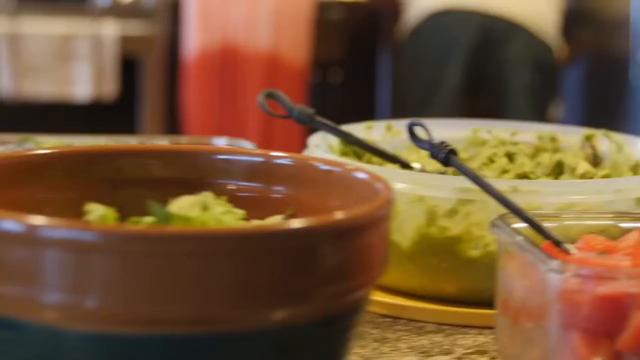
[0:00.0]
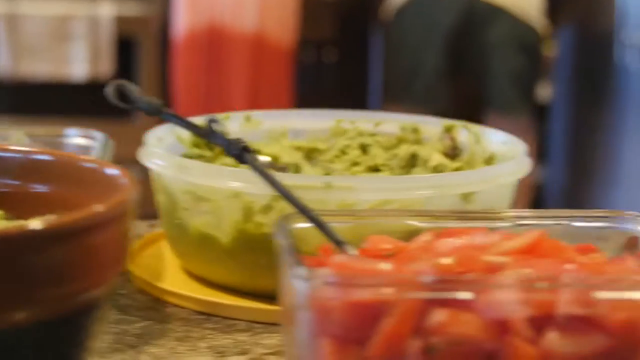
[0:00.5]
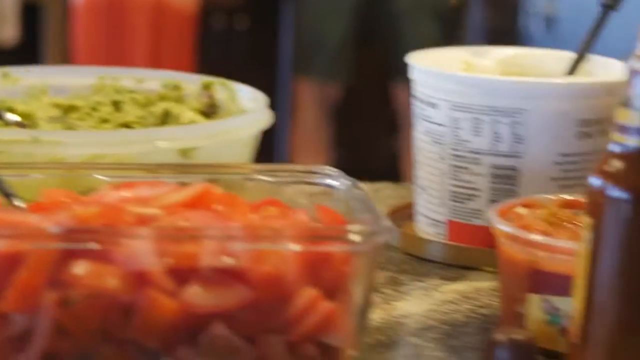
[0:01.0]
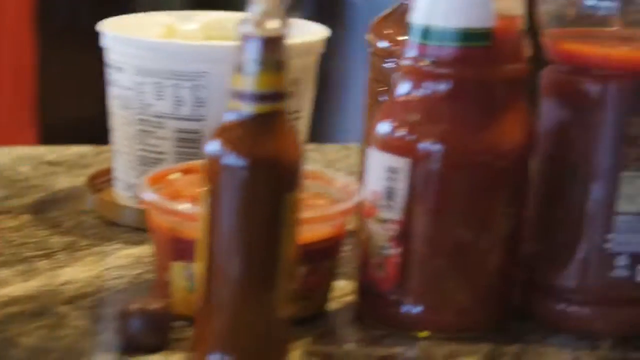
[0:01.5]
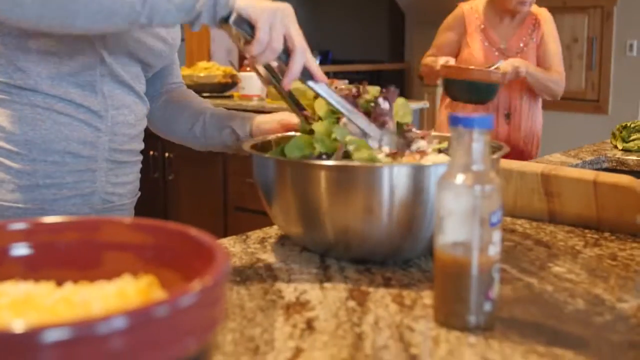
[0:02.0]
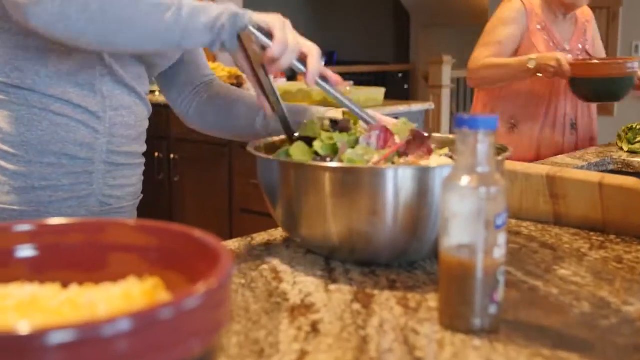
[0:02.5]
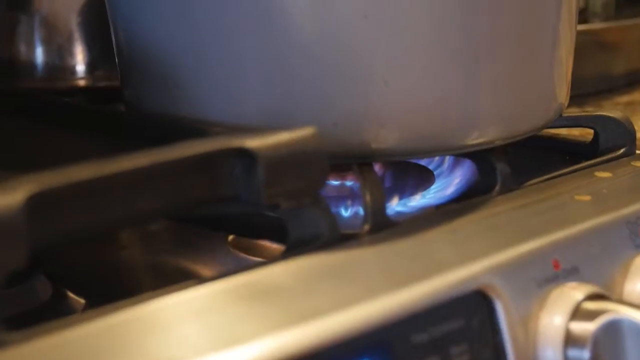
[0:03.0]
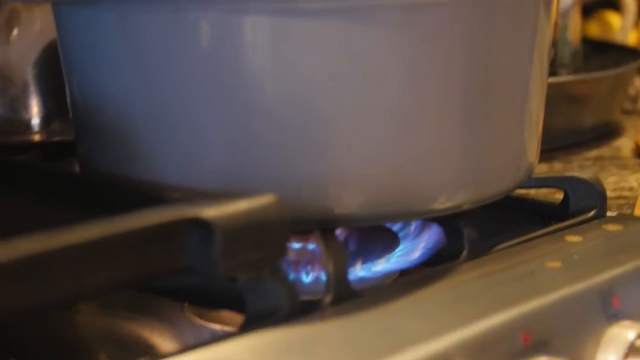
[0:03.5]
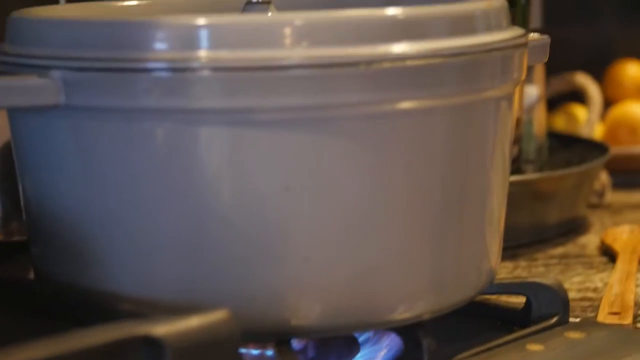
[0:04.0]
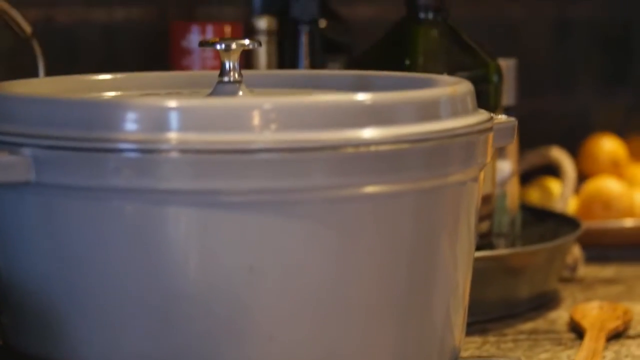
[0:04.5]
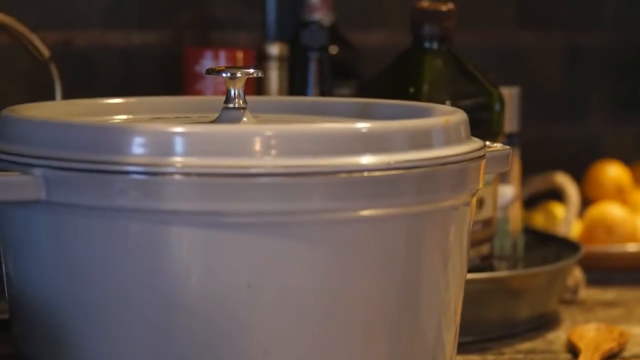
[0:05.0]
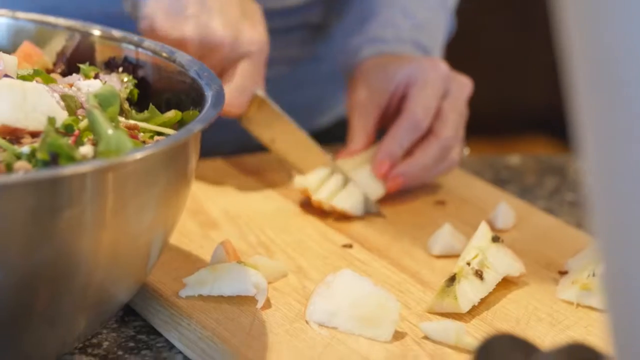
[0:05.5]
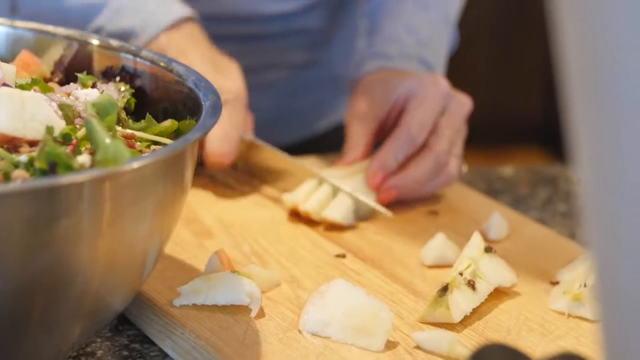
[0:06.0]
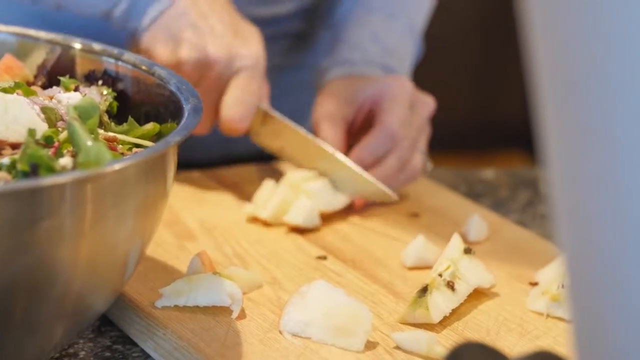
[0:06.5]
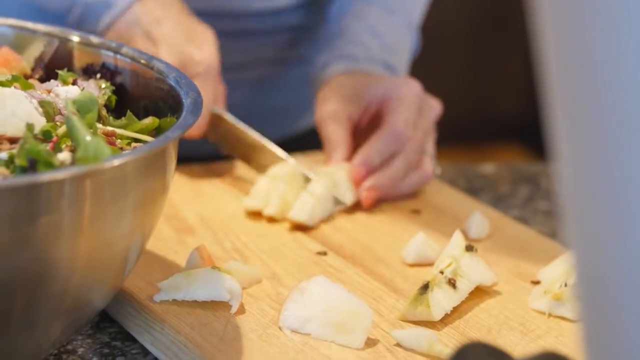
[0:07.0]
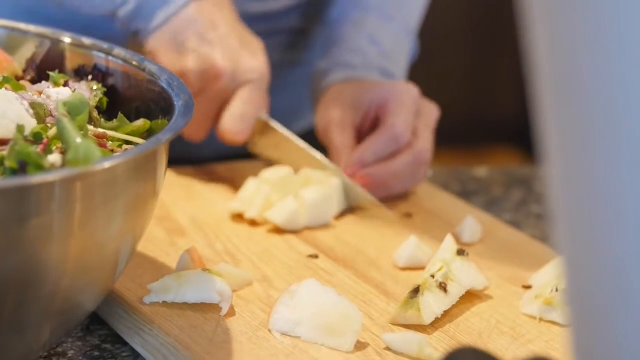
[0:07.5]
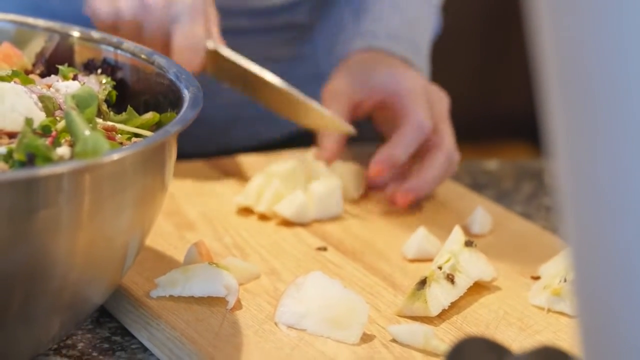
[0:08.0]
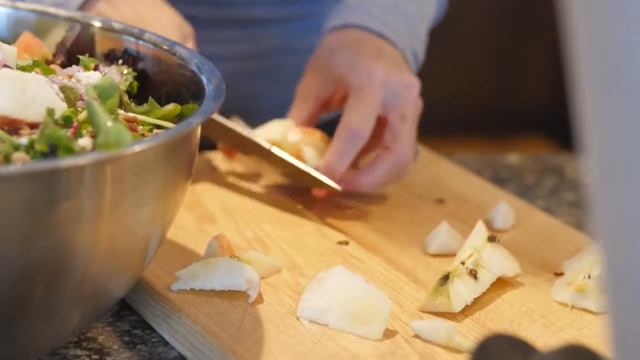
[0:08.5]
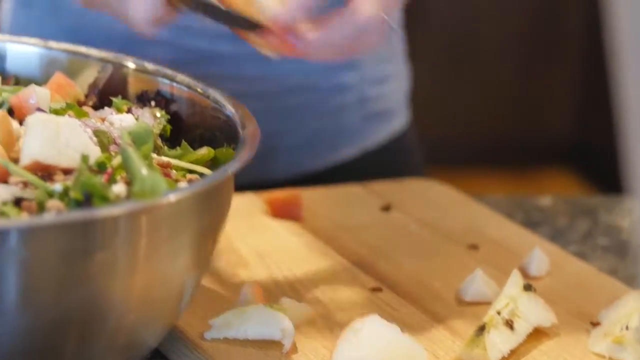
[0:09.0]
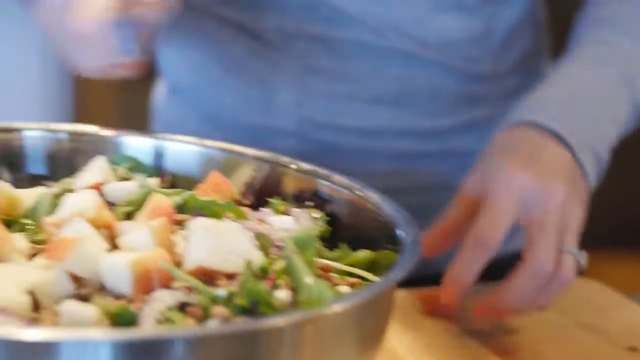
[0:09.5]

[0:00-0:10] Several different colored bowls appear: a brown bowl, a clear bowl and a glass bowl, with spoons in them. One has lettuce, one looks like it holds guacamole, and one looks like it holds tomatoes. A lady in a white shirt tosses a salad. A silver pot is on the stove. Someone cuts potatoes with a knife and throws them into a bowl. The camera pans across the items again, and the flame under the pot on the stove is shown. The lady cuts the potatoes into small bite-sized pieces. Another lady is there, moving pots from one side of the counter to the other. Onions are on the counter, along with a big silver bowl holding the vegetables and salad. There is sour cream and barbecue sauce, and what looks like wine on the counter. There is a brown cutting board, towels are on the stove handle, and oil is on the counter. Again the lady cuts the potatoes and puts them into the big bowl.